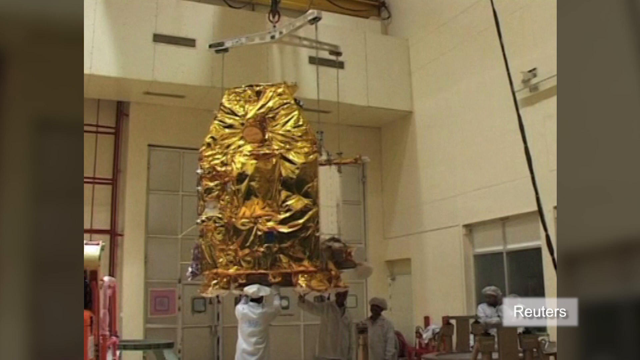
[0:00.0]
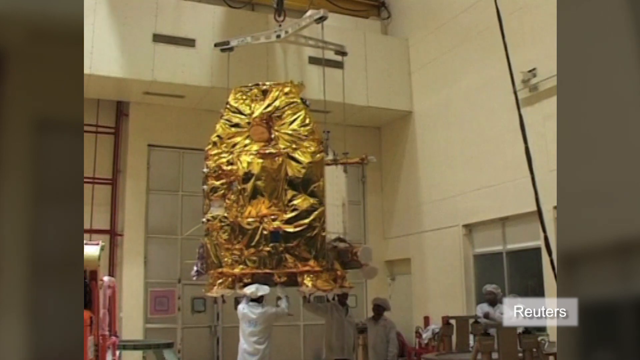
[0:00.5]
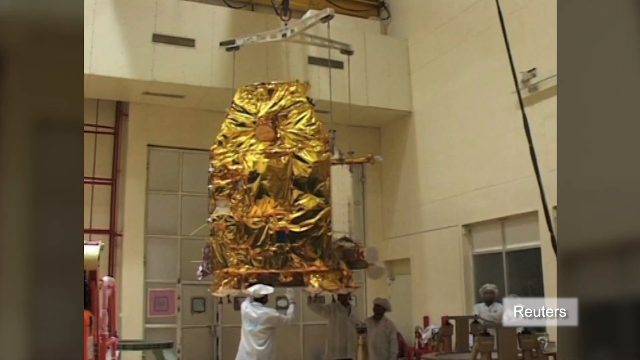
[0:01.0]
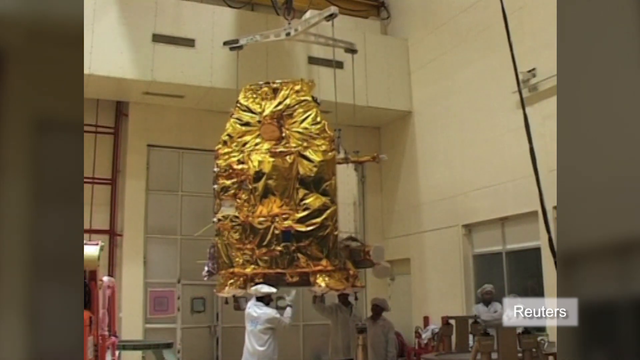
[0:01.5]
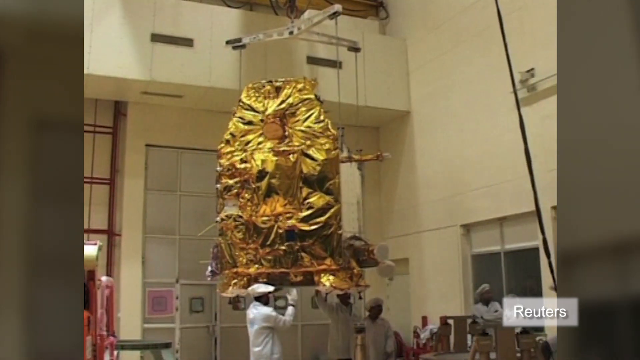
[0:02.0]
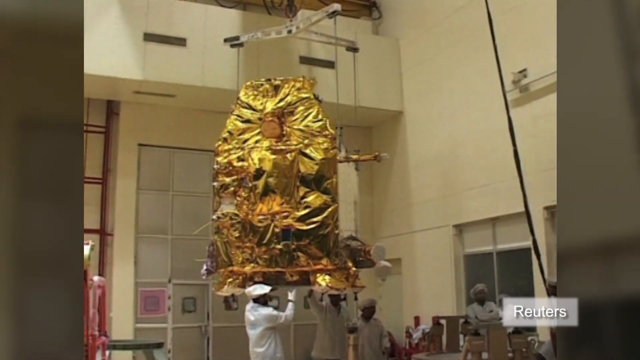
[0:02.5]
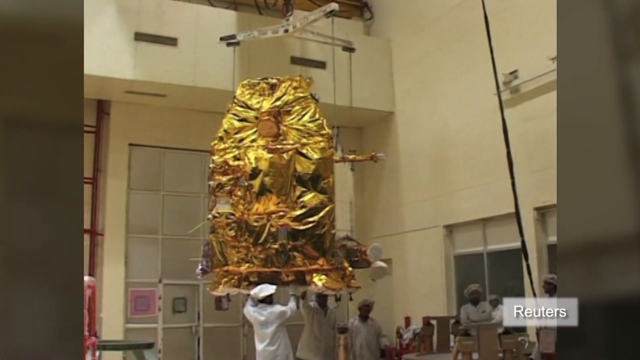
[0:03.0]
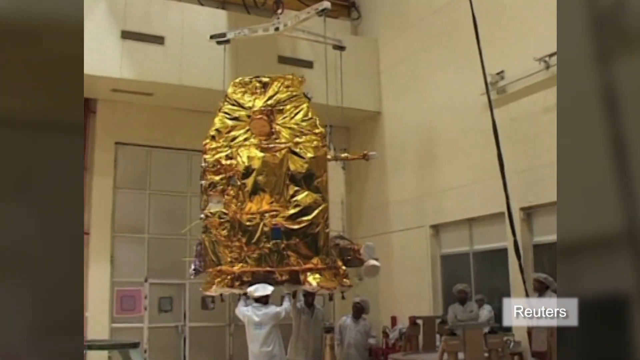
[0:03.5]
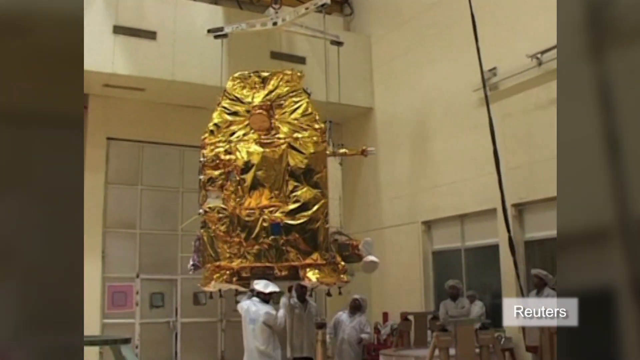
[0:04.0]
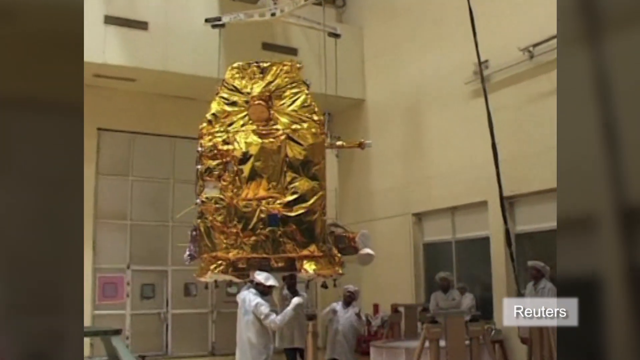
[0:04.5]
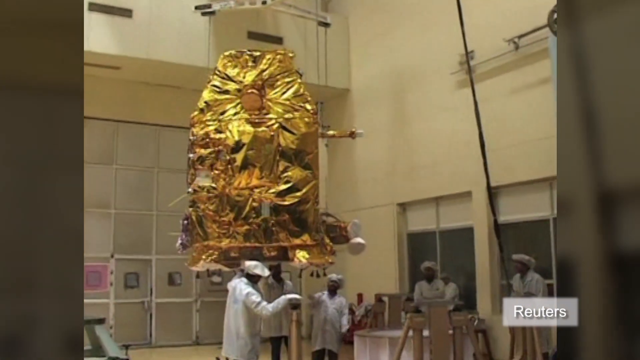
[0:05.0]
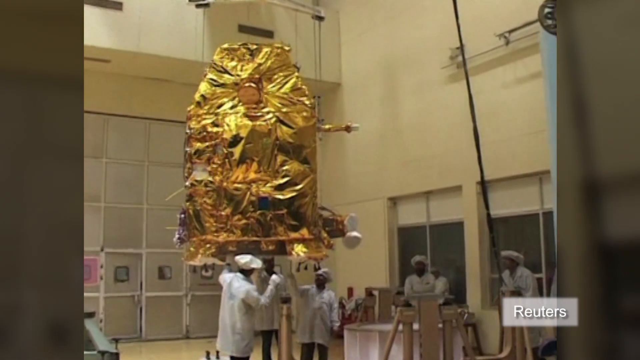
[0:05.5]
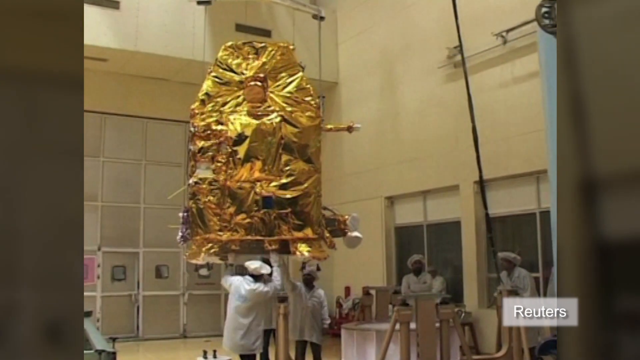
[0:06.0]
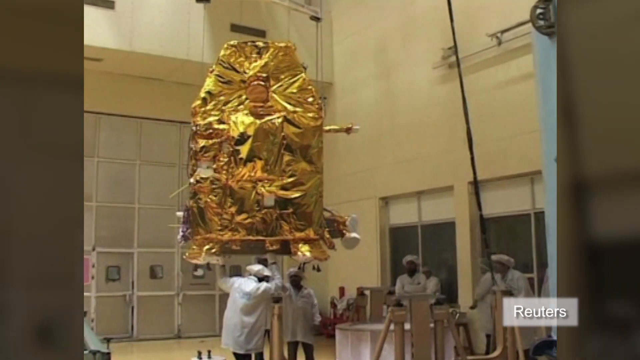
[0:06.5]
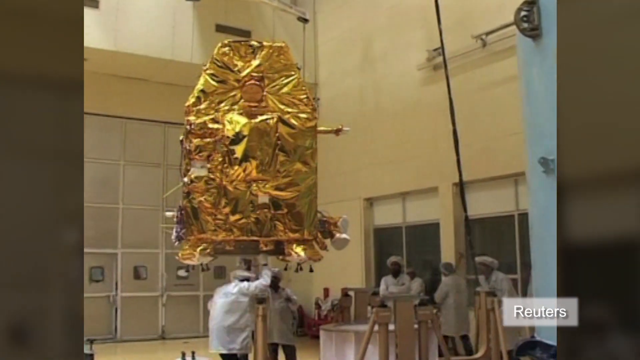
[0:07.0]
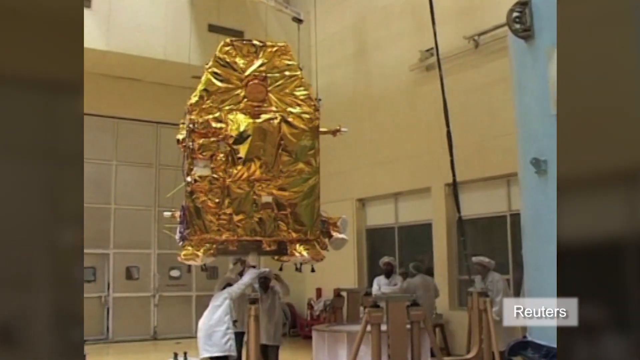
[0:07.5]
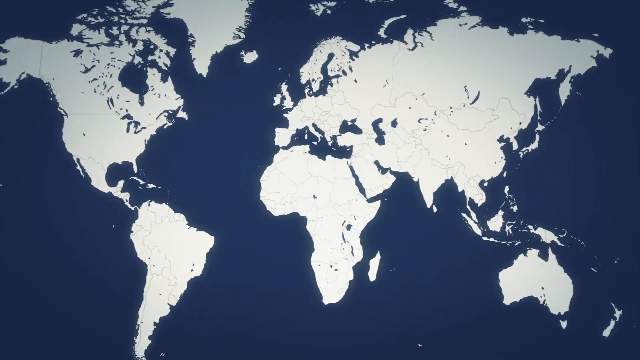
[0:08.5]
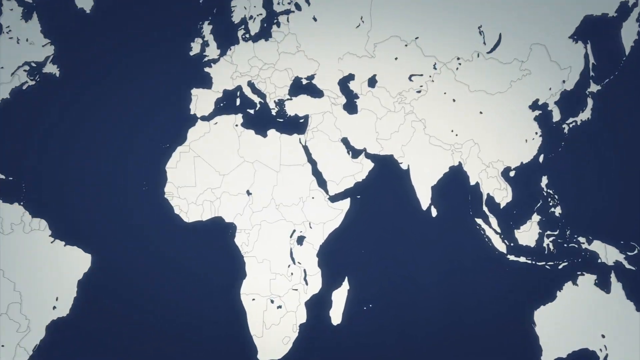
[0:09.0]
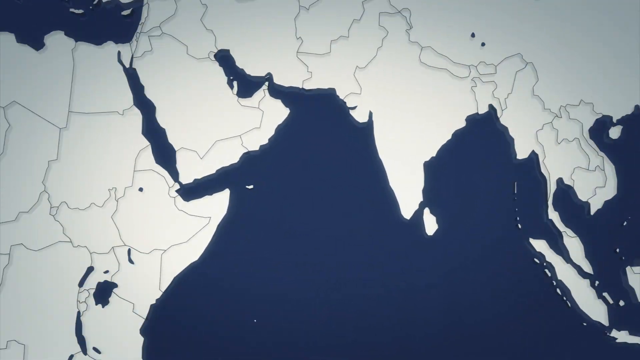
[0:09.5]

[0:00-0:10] A gold, foil-like object is shown, and it is hard to tell what it is; it looks somewhat like liquid gold over a tree that seems dead, with a bunch of branches all around it. Several people guide the object as it hangs from a crane of some kind, with cables coming in. One man, wearing gloves and something almost like a chef hat, kind of holds position toward the right, another man operates the crane, and another man in a white lab coat is kind of looking underneath it. They are in a factory of some kind. There are some segments of windows. There appear to be three sets of cables, two on the front and one on the back, on some kind of lift, and the object is on some kind of round base. Two men use their hands to kind of guide it into place. The video then moves to a view of the continents and kind of zooms in on one particular area, some kind of island apparently off the coast of Europe. The footage looks like it is from the 90s, and it is by Reuters.